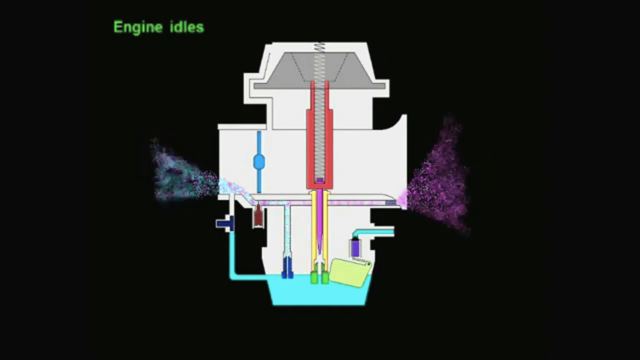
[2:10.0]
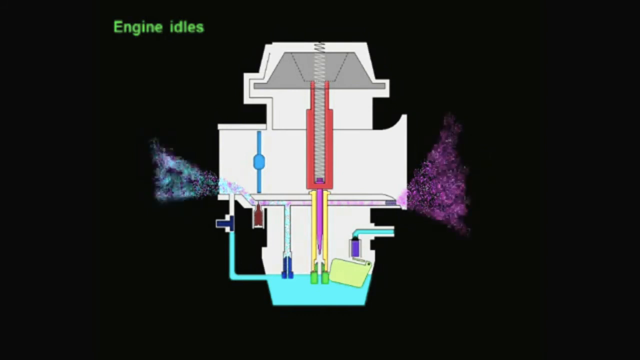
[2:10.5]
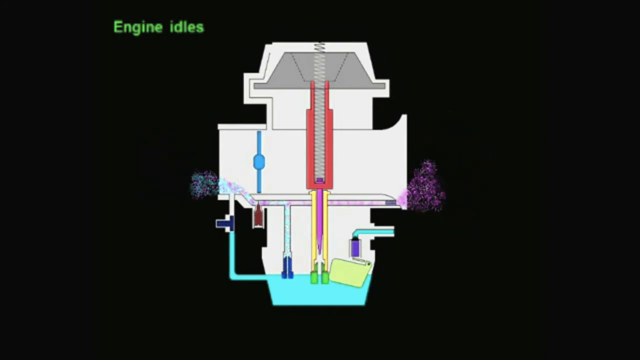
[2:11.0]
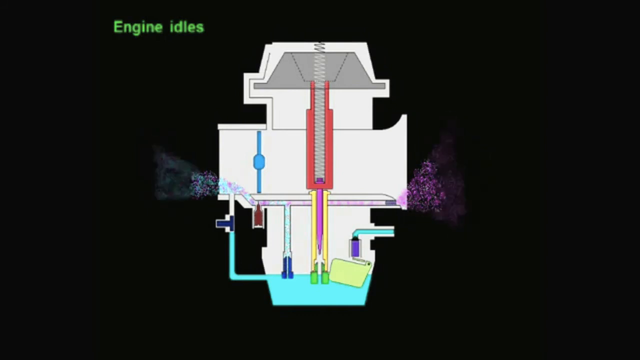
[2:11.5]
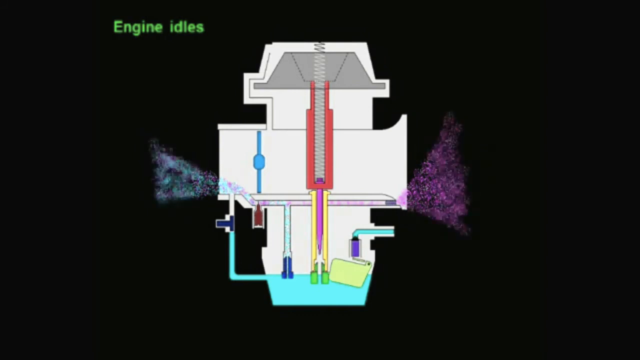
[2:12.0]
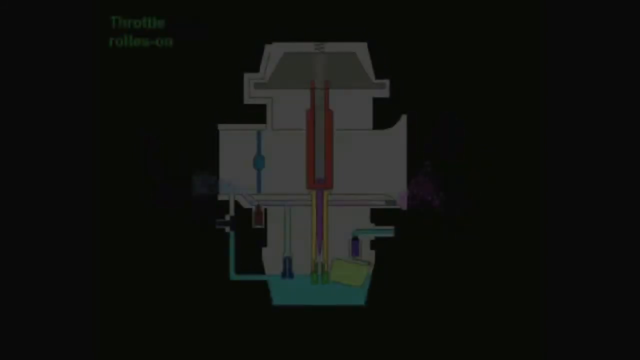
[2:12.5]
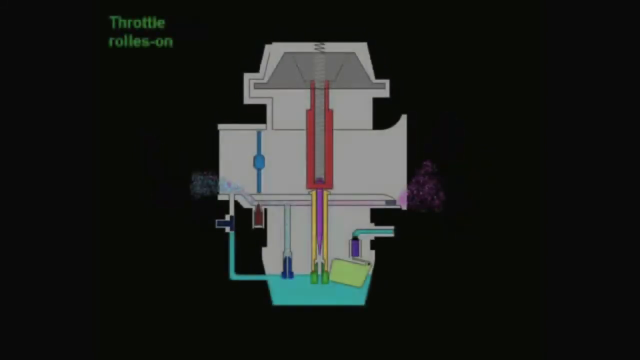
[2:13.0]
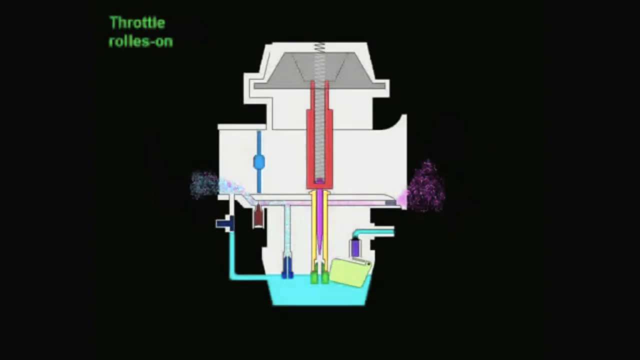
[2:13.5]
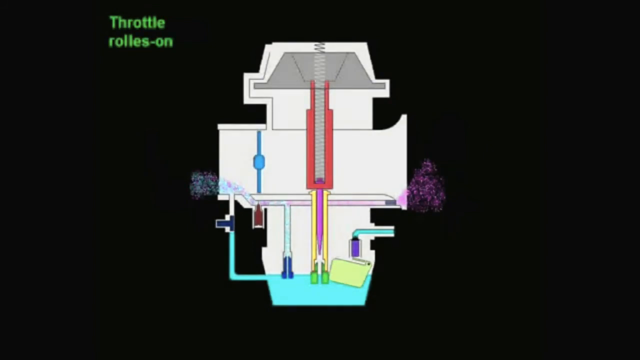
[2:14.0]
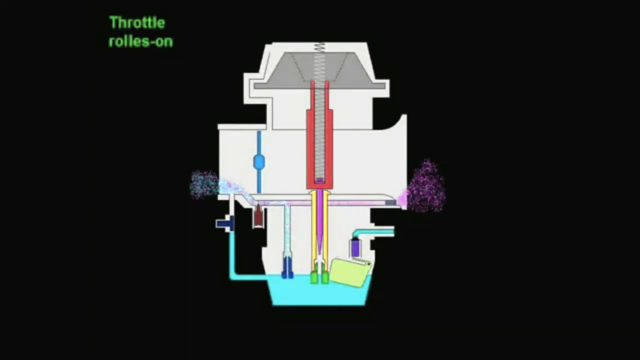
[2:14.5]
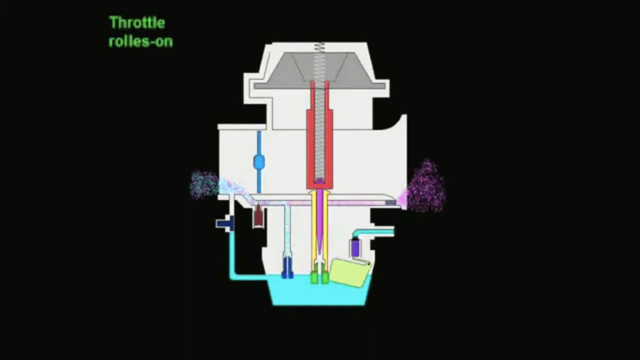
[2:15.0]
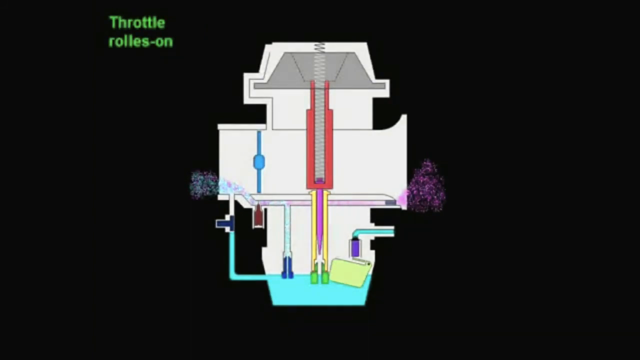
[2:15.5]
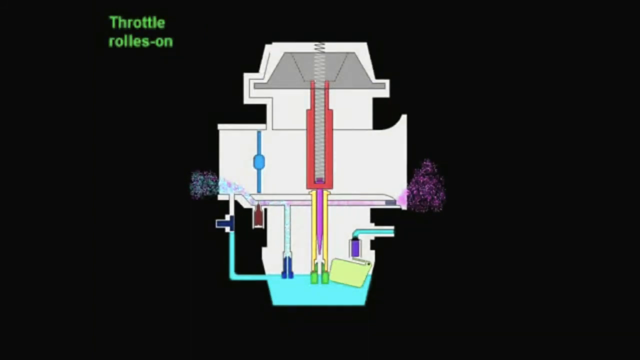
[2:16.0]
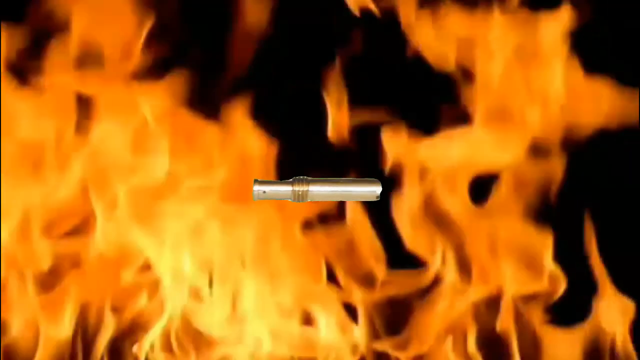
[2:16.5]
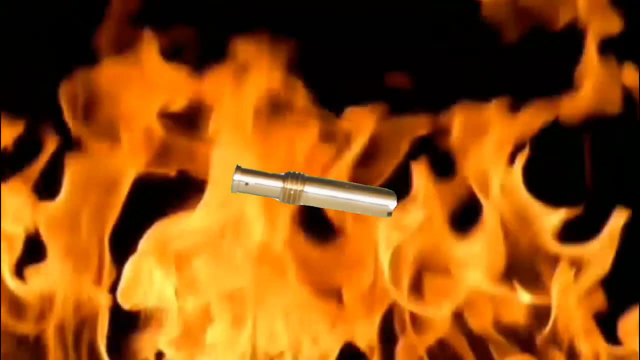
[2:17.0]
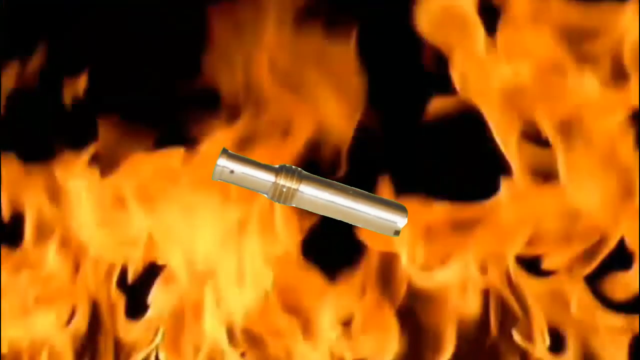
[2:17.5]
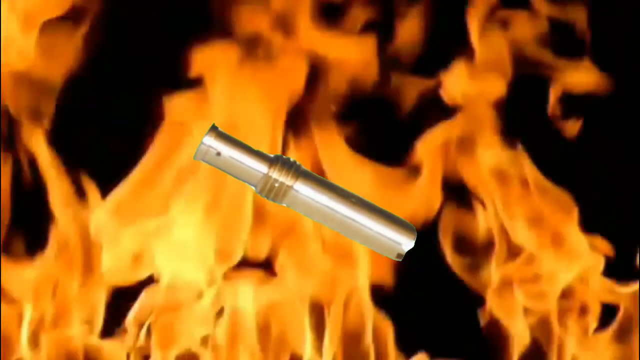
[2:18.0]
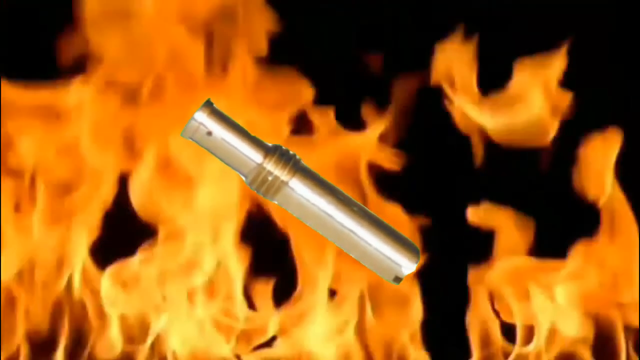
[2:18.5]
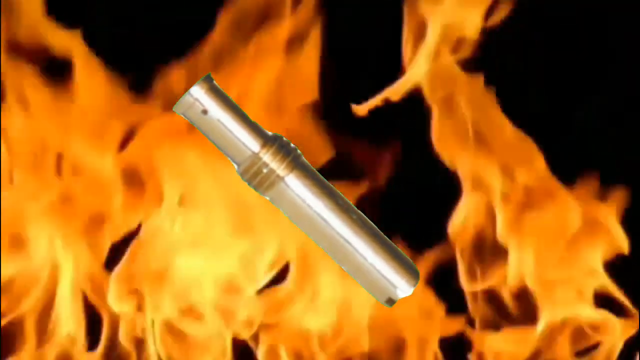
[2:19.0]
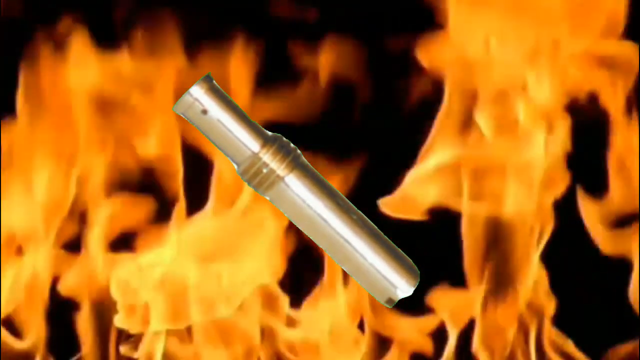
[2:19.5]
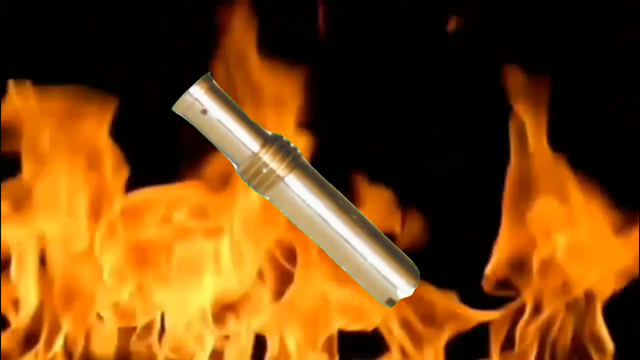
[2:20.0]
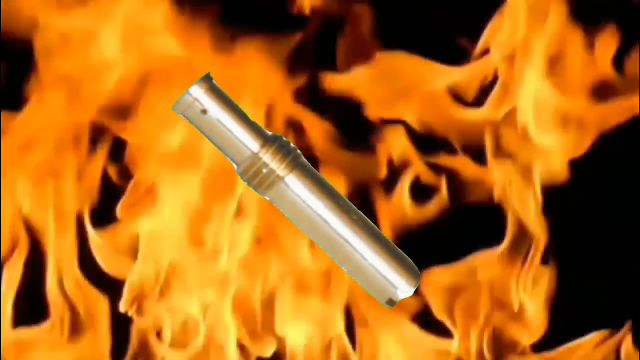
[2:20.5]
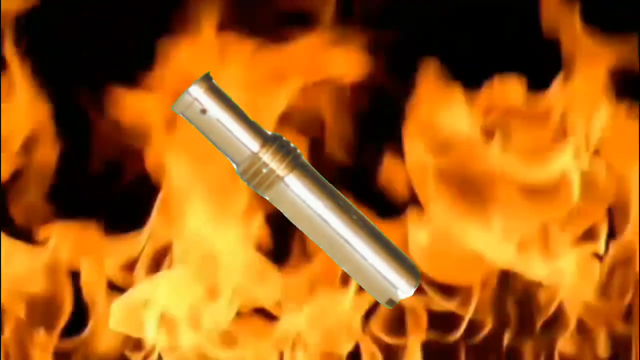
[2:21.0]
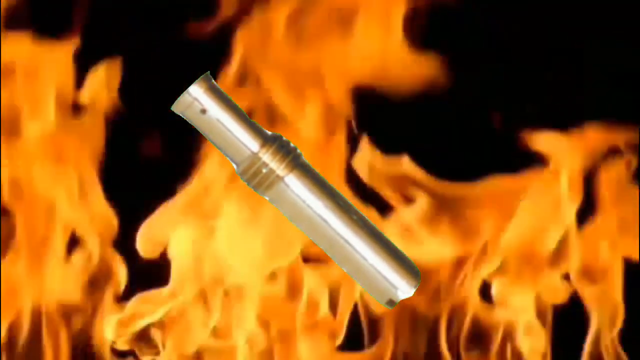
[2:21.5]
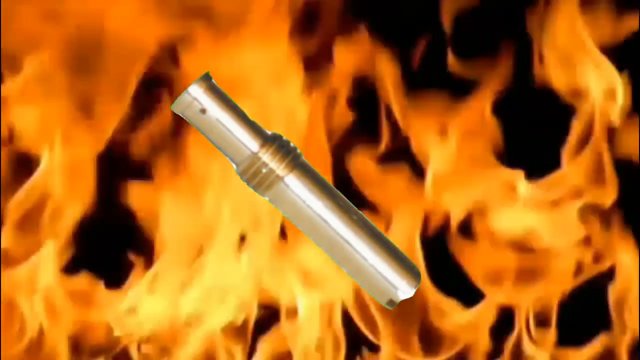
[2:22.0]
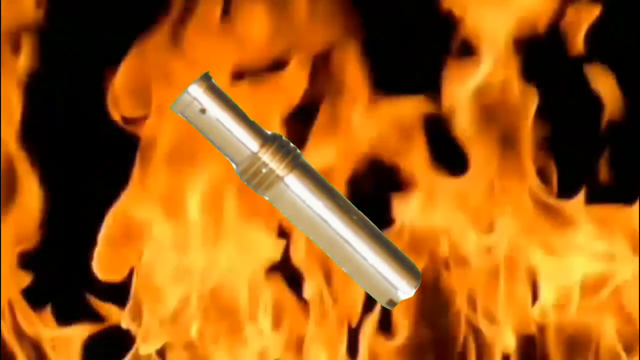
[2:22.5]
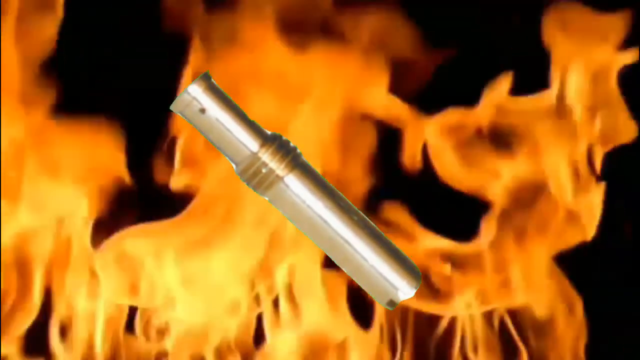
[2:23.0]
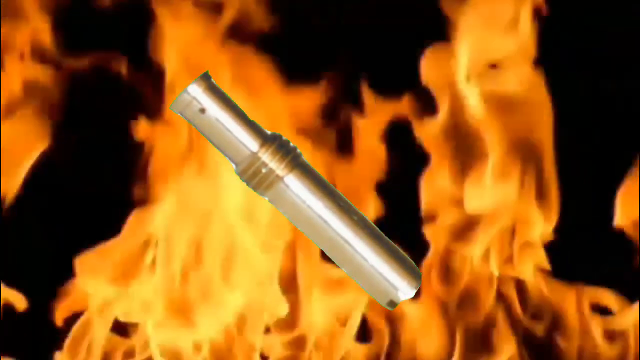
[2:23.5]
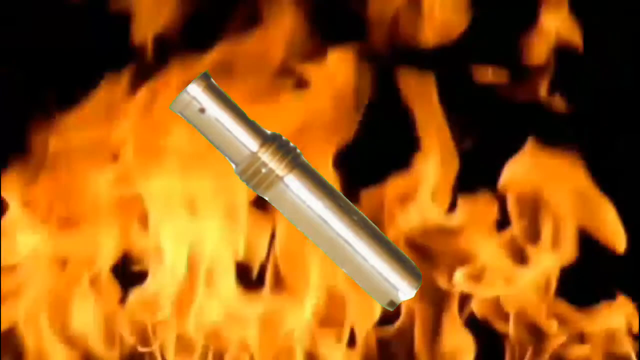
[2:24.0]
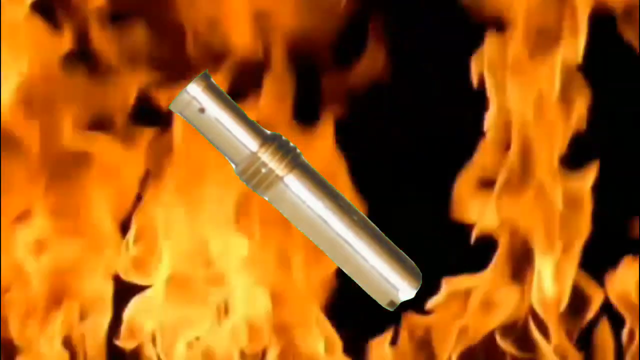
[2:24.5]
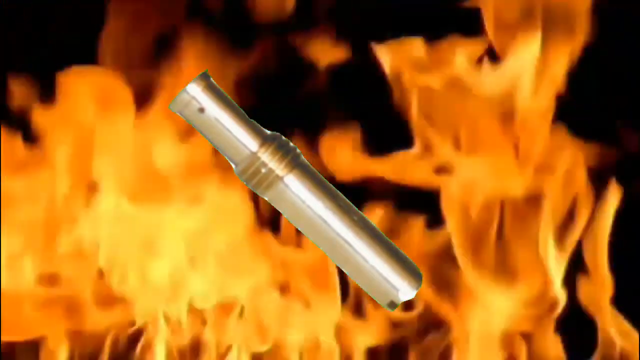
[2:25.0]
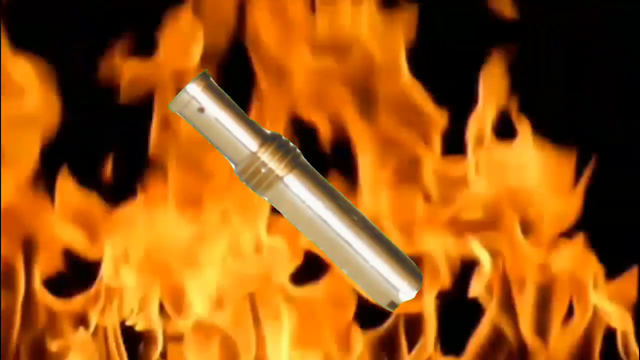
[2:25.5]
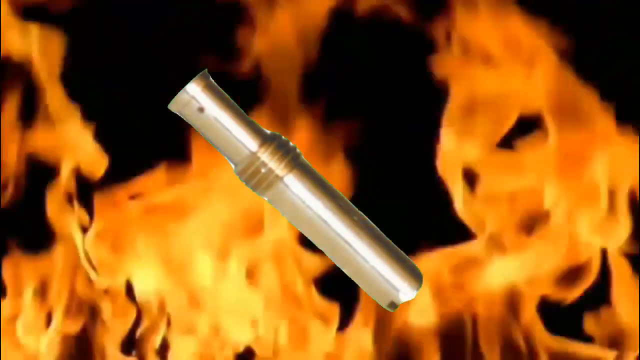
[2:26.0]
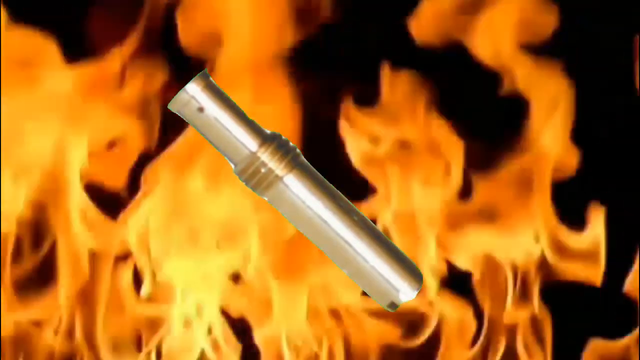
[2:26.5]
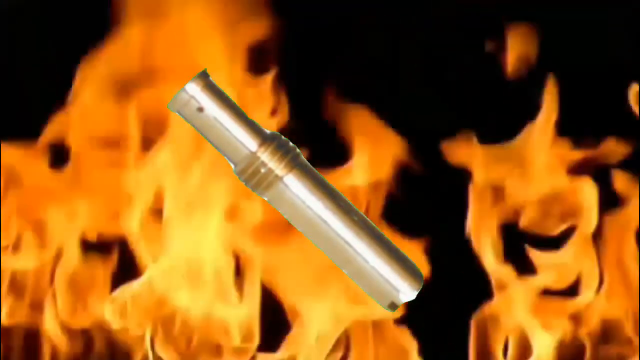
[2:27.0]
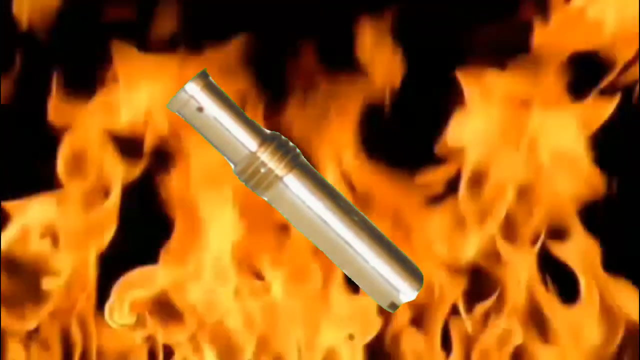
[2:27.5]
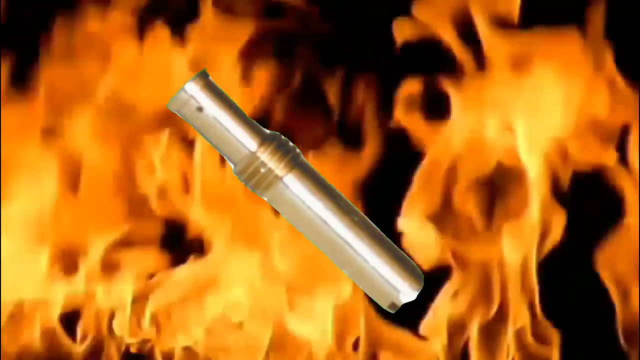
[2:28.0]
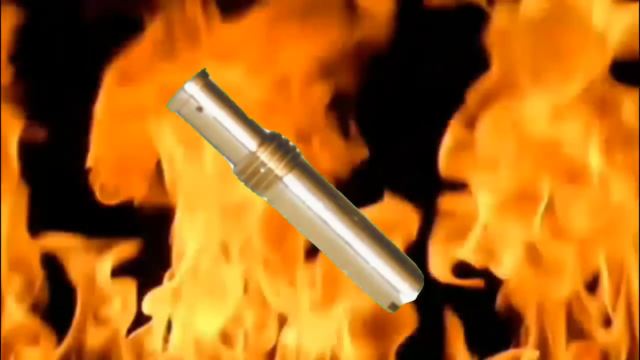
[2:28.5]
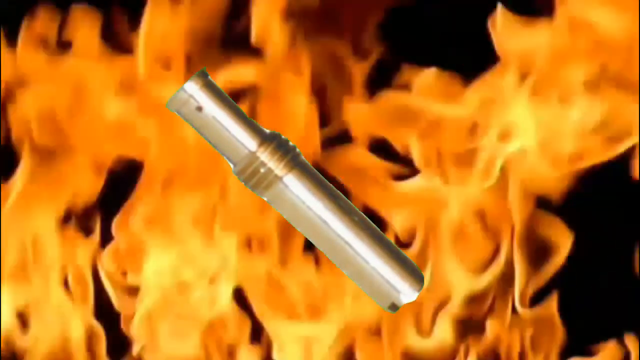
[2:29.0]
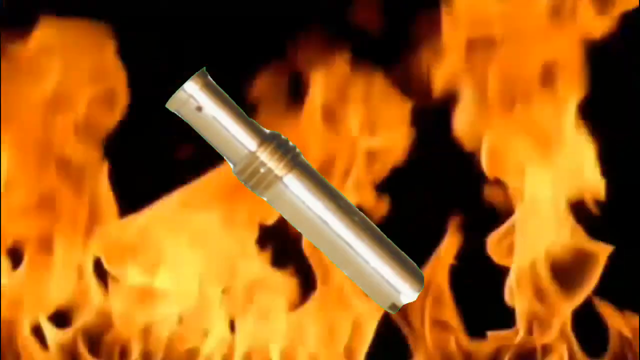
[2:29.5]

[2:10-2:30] More flashing colors appear as the throttle rolls on. A fire background then appears, and a skinny little round silver part with some gold bands on it moves slowly in the center of the screen; it is possibly the throttle. A black screen is in the background with the animation.